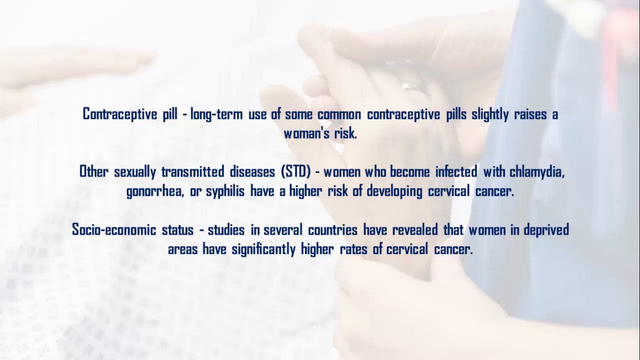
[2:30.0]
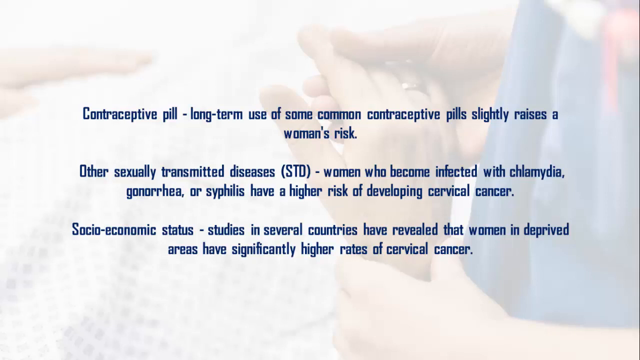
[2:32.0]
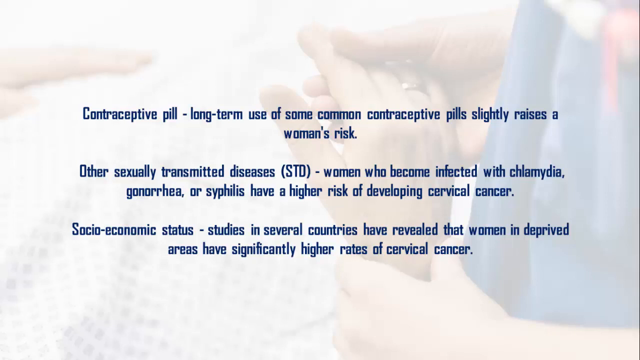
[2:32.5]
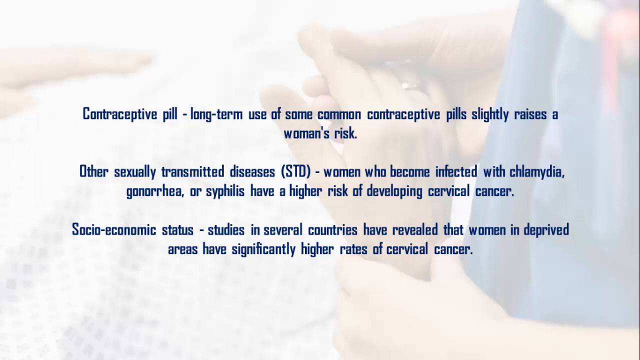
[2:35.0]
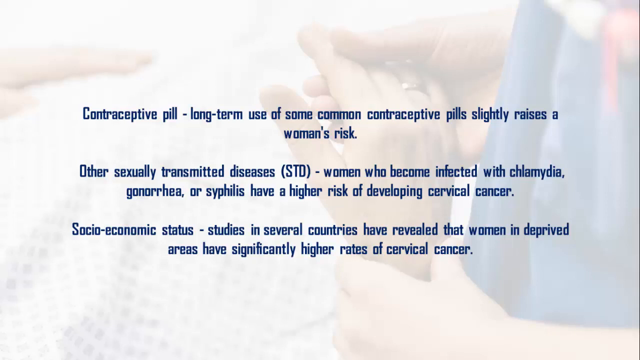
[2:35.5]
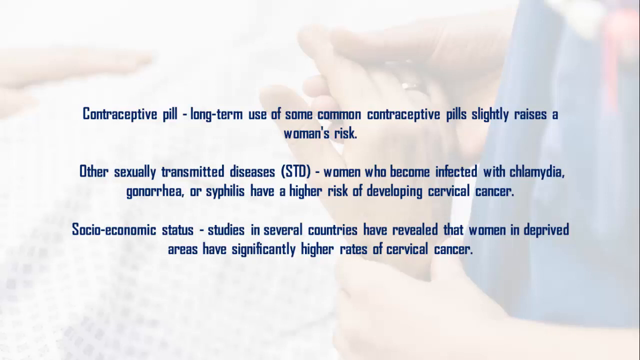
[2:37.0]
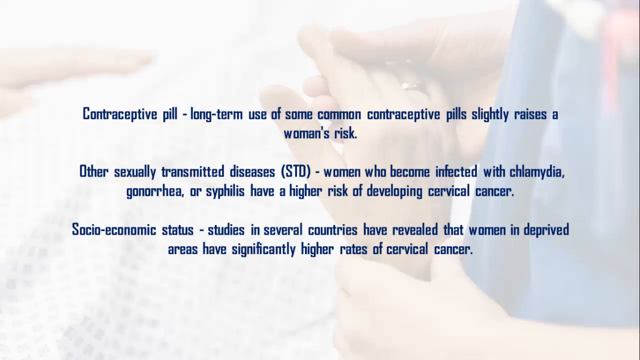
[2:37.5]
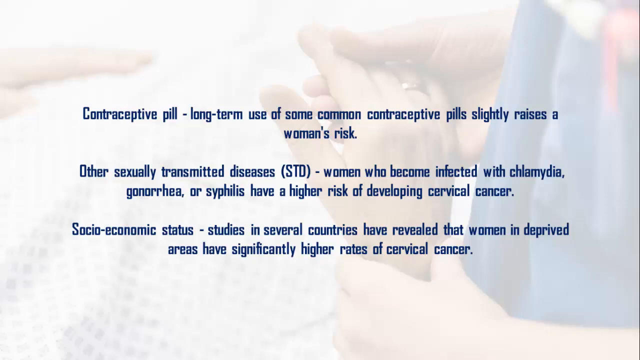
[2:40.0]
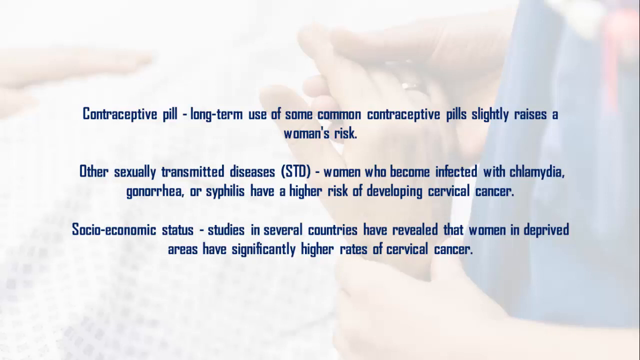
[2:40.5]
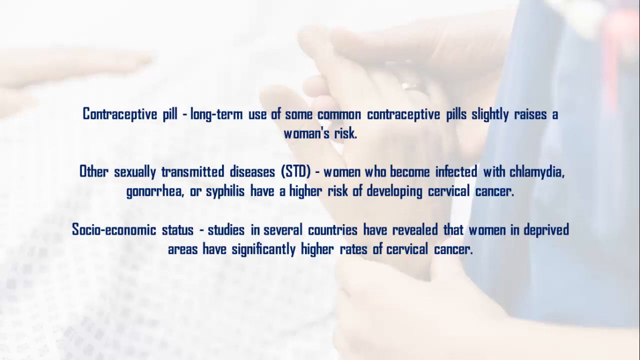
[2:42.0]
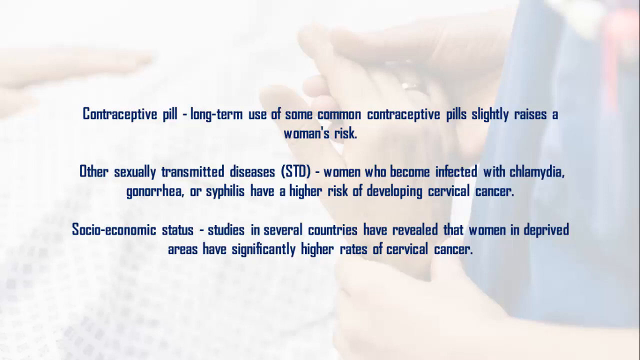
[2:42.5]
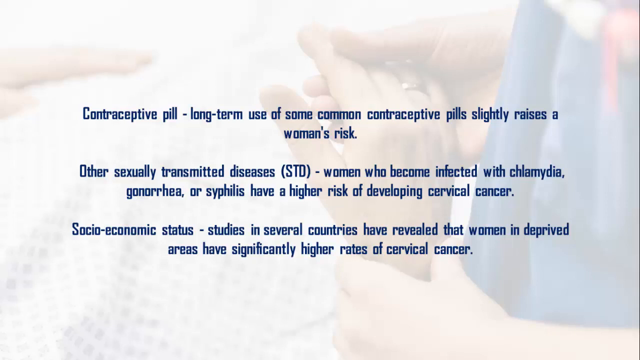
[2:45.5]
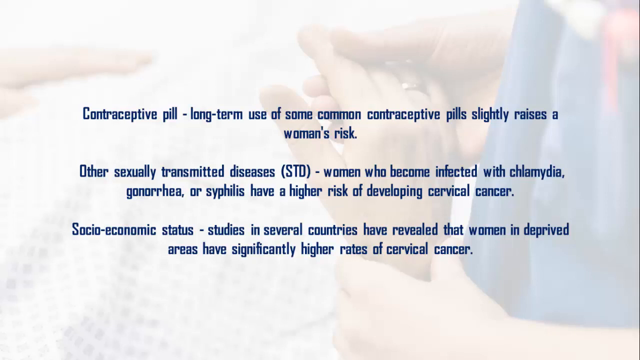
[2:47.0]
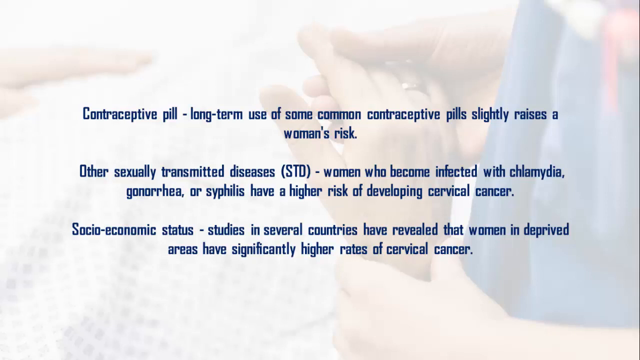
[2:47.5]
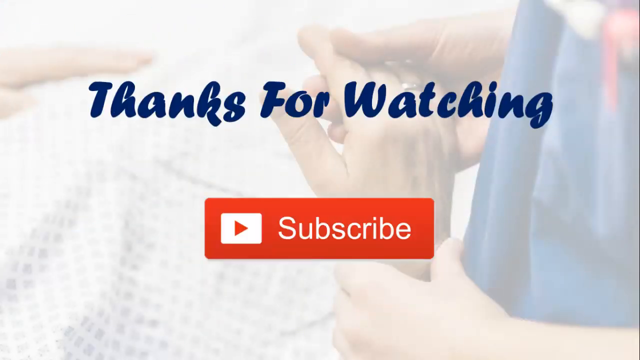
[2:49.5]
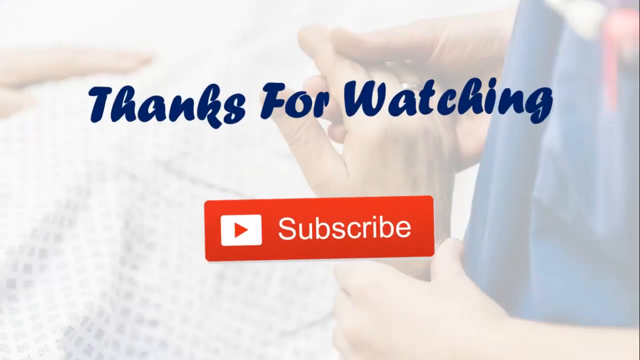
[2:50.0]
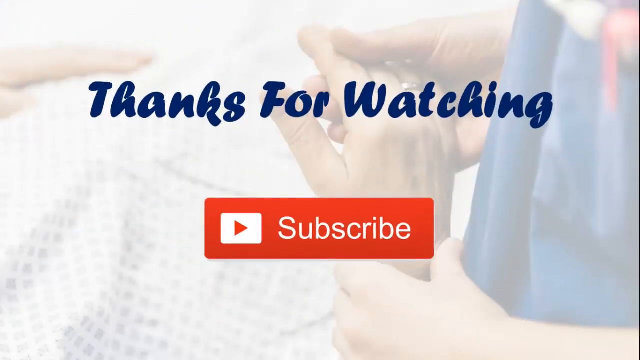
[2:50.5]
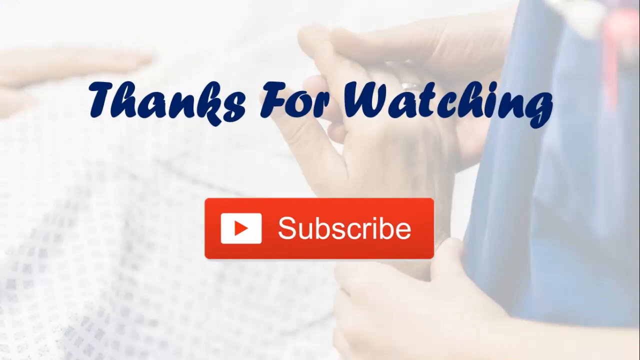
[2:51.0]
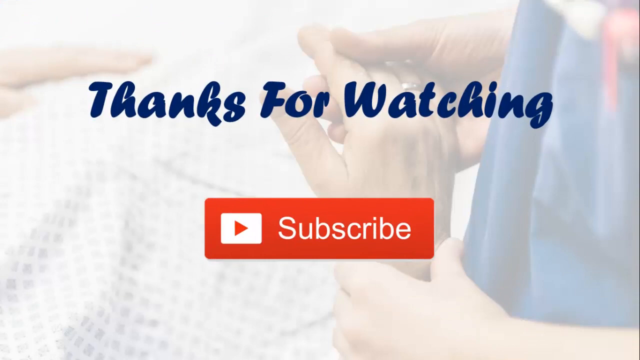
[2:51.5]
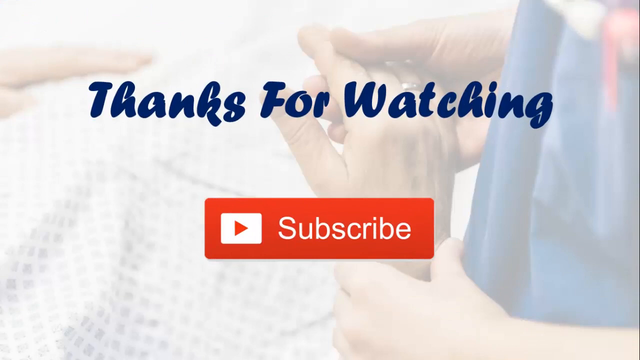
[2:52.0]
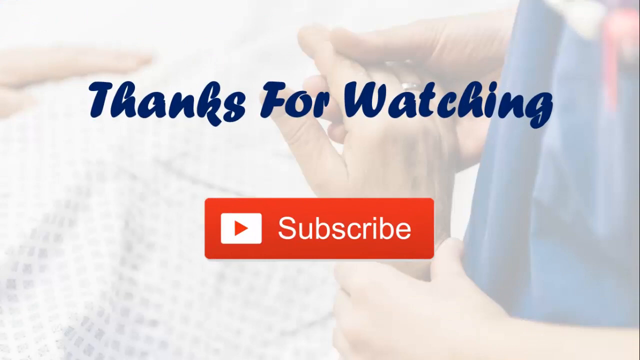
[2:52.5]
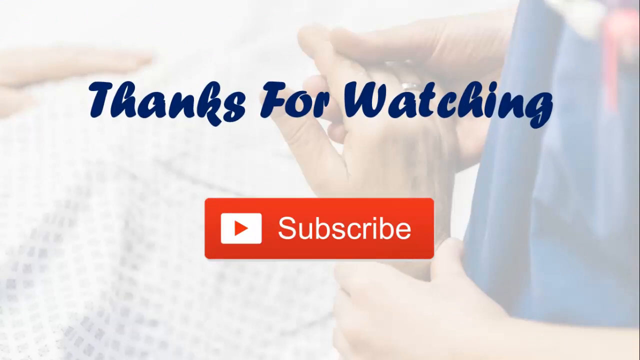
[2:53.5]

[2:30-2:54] A new background image appears, grayed out and difficult to see; it looks like somebody is holding a person's hand, and there appears to be a gold band like a wedding ring. Over it, dark blue text in three centered paragraphs says: "Contraceptive pill, long-term use of some common contraceptive pills slightly raise a woman's risk. Other sexually transmitted diseases (STD), a woman who became infected with chlamydia, gonorrhea, or syphilis have a higher risk of developing cervical cancer. Socioeconomic status, studies in several countries have revealed that women in deprived areas have significantly higher rates of cervical cancer." "STD" is in capital letters. All of that text then goes away and is replaced with bigger dark blue text that says "thanks for watching," followed by a red rectangle with the word "subscribe" inside and a square with a red play button inside.